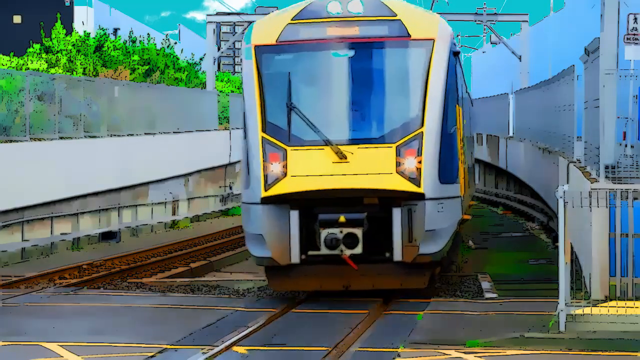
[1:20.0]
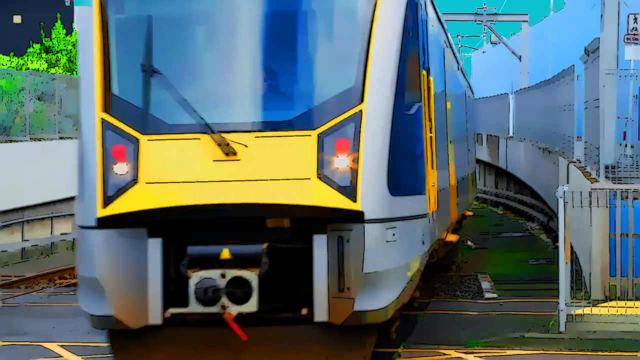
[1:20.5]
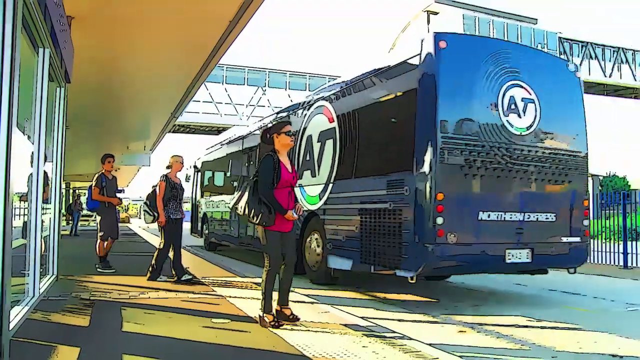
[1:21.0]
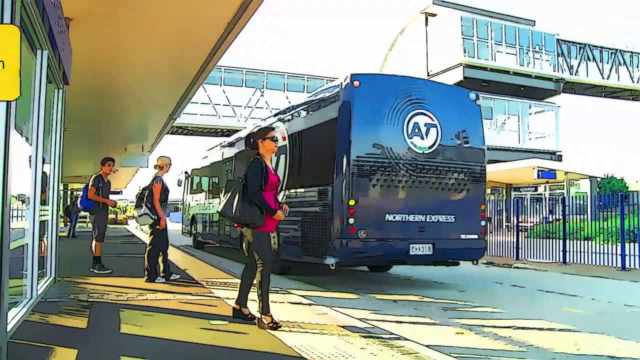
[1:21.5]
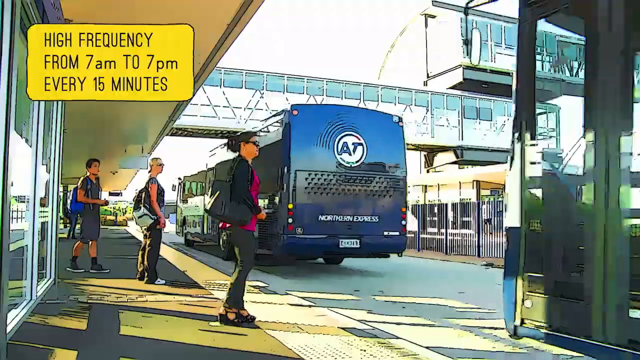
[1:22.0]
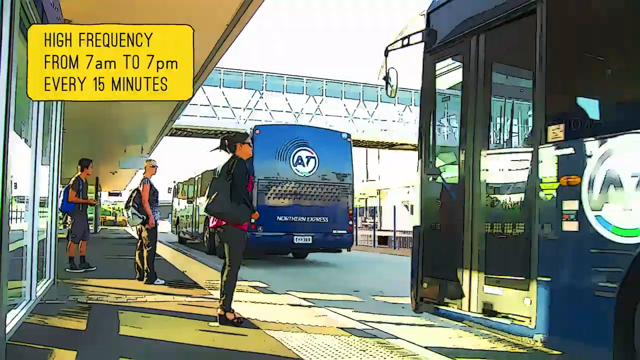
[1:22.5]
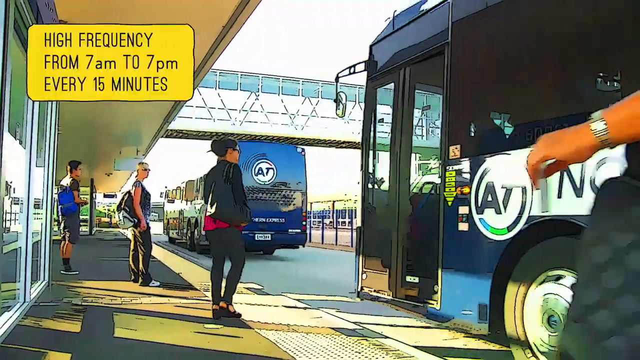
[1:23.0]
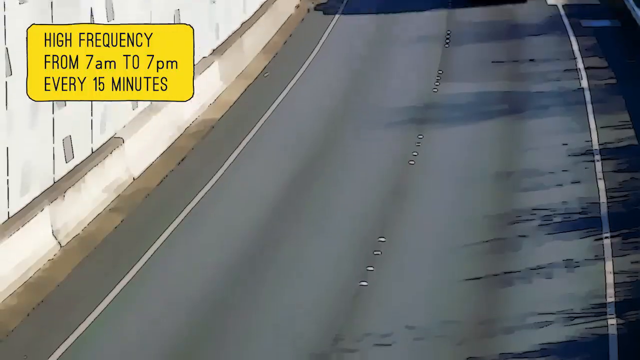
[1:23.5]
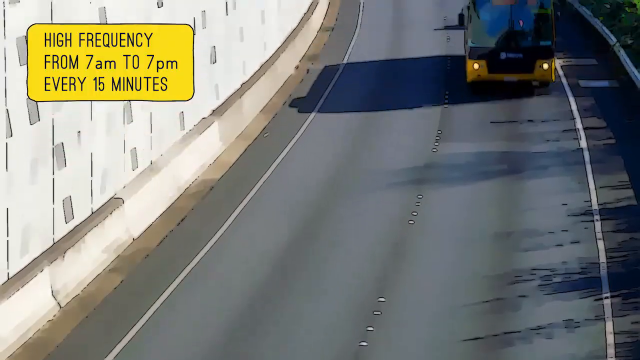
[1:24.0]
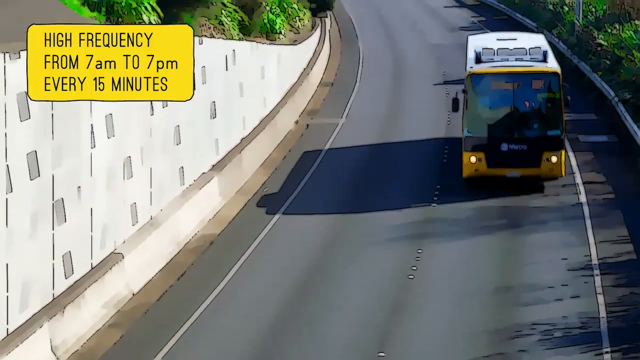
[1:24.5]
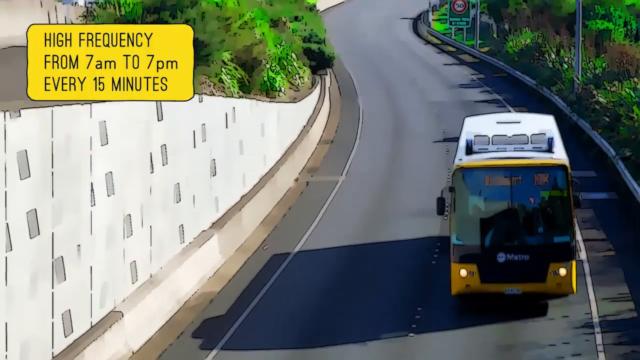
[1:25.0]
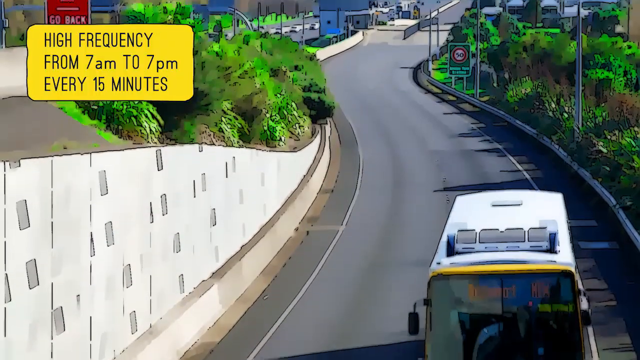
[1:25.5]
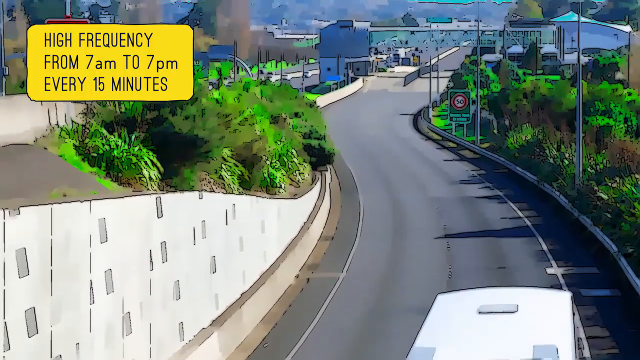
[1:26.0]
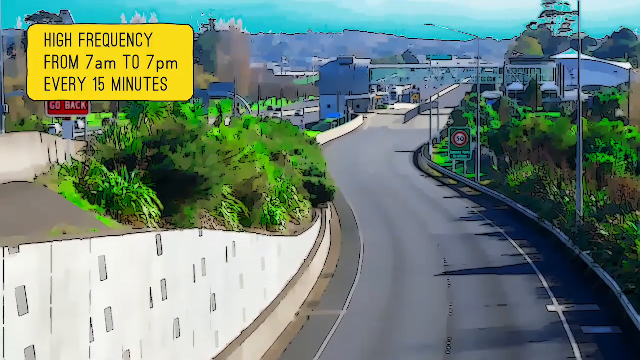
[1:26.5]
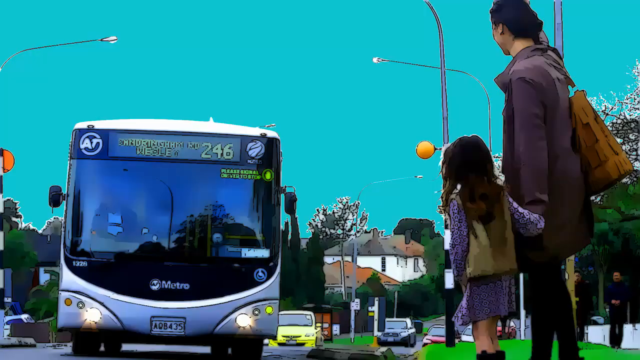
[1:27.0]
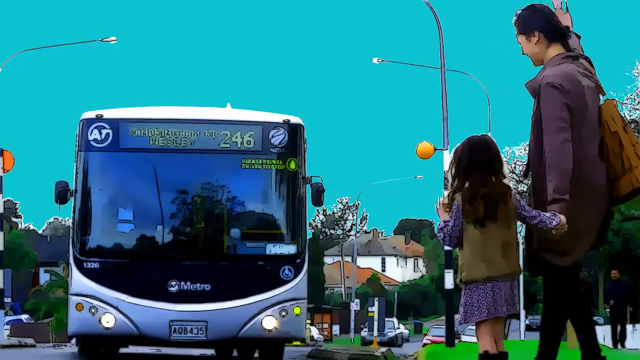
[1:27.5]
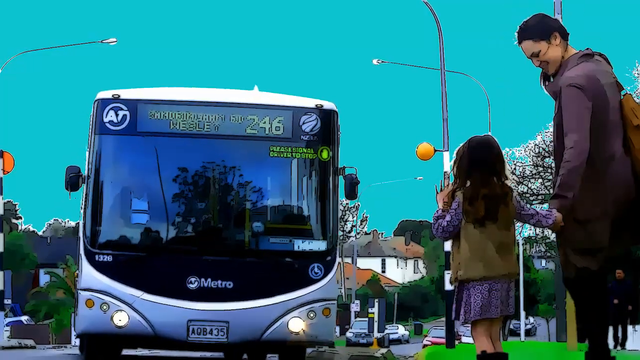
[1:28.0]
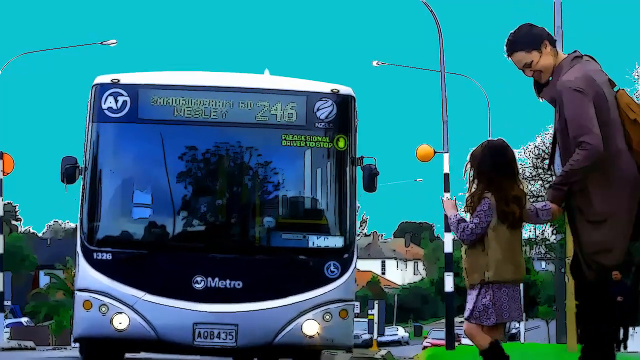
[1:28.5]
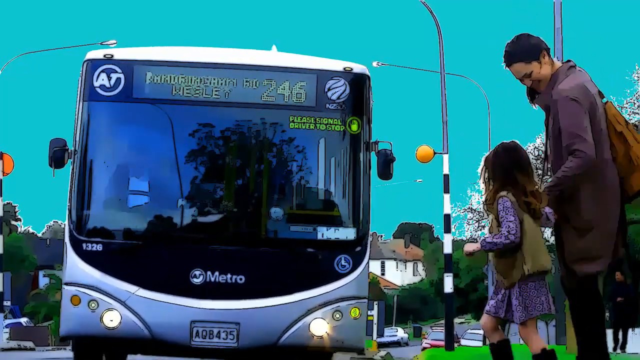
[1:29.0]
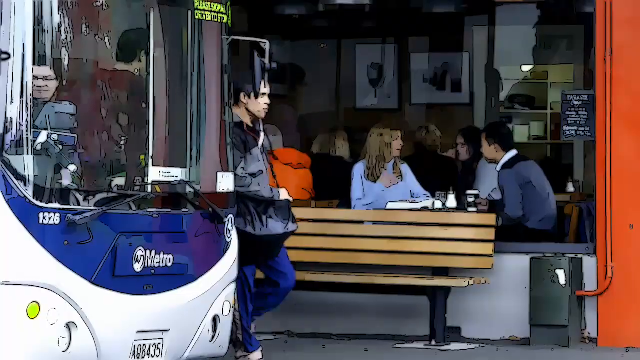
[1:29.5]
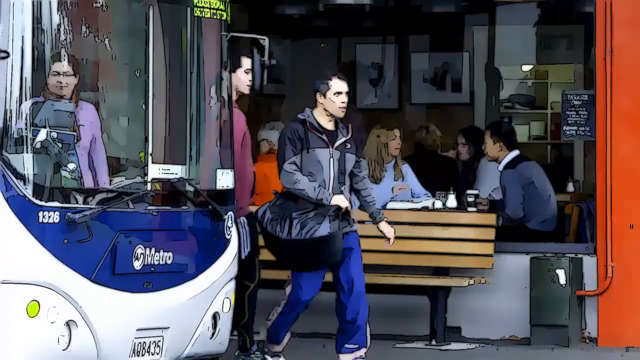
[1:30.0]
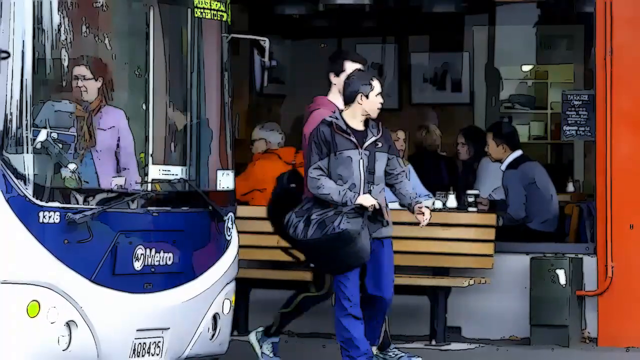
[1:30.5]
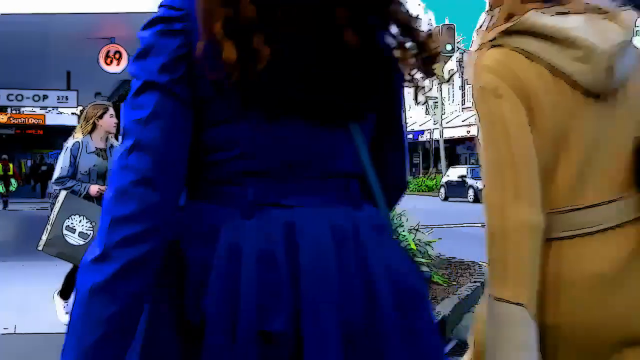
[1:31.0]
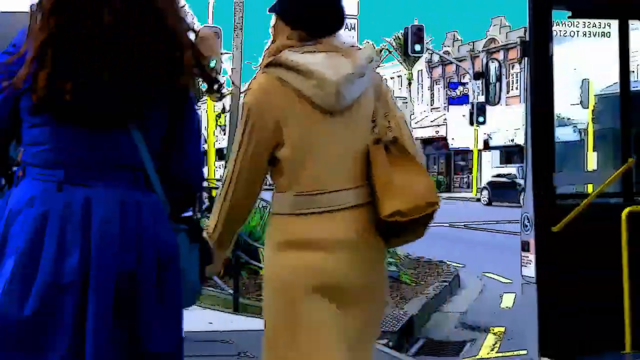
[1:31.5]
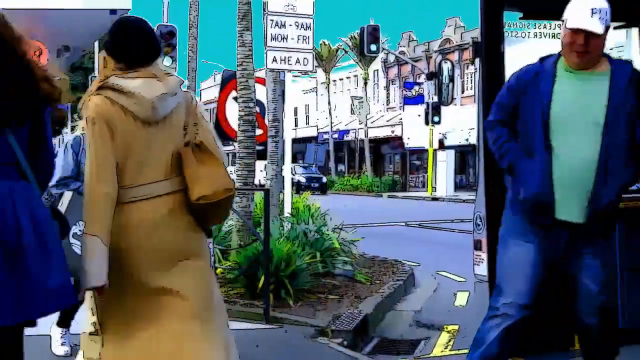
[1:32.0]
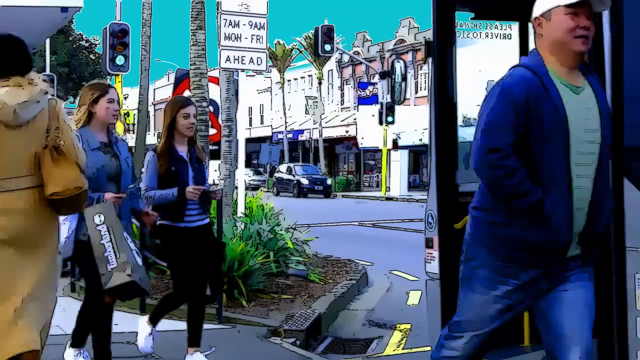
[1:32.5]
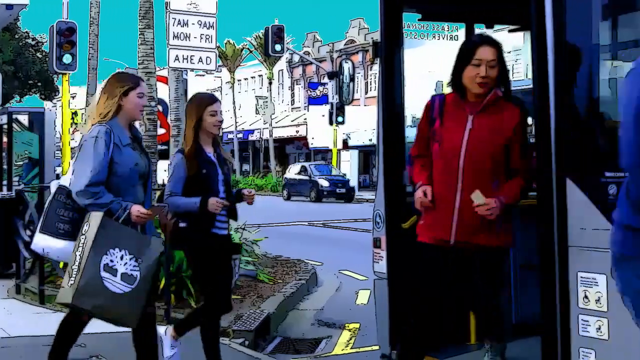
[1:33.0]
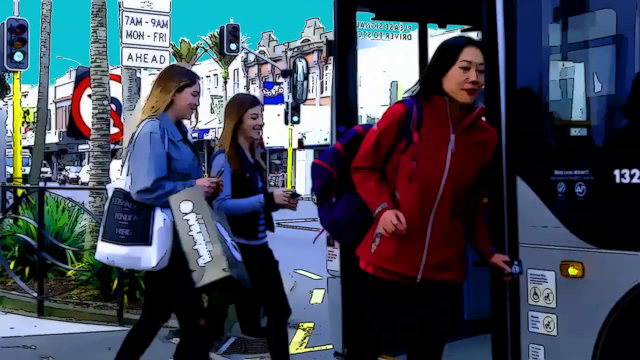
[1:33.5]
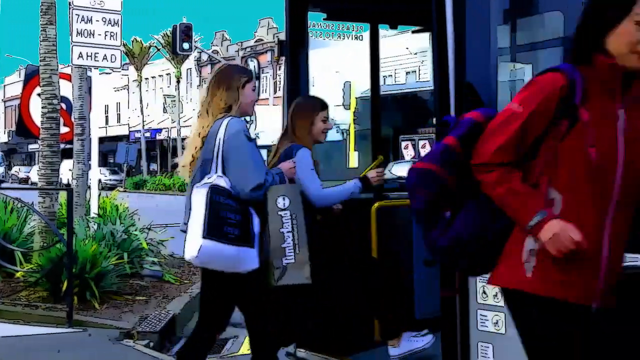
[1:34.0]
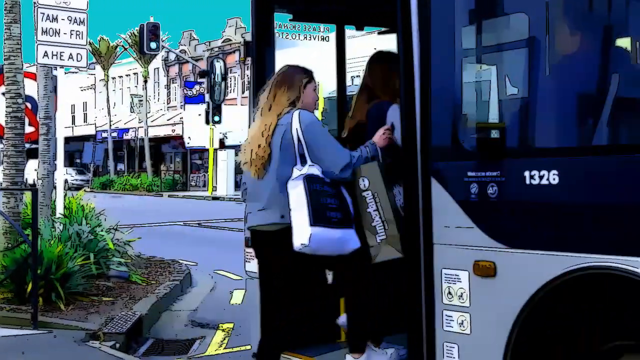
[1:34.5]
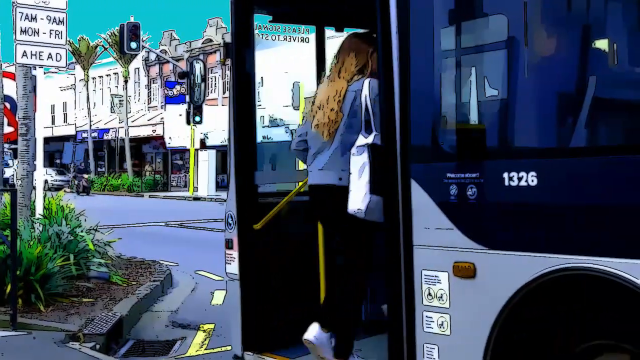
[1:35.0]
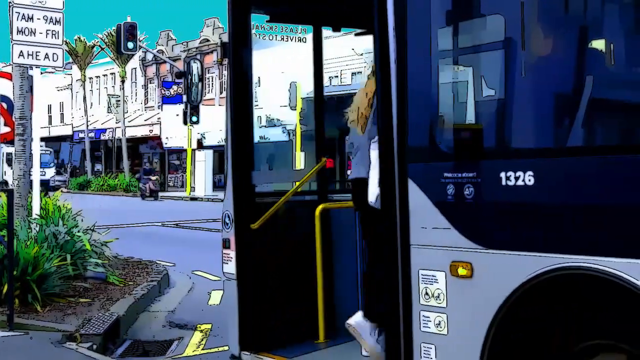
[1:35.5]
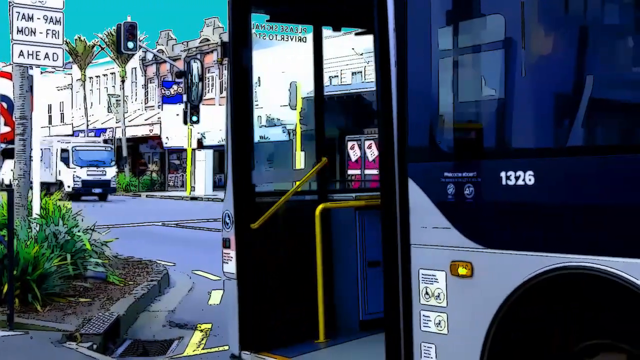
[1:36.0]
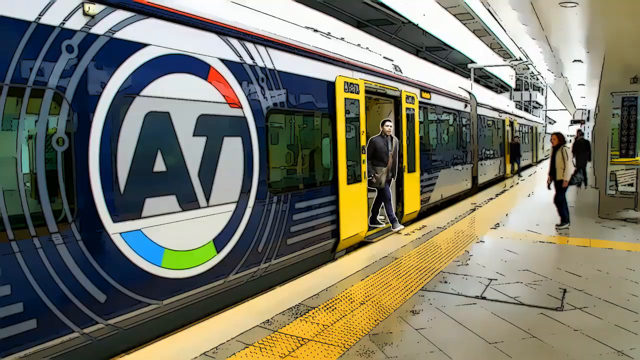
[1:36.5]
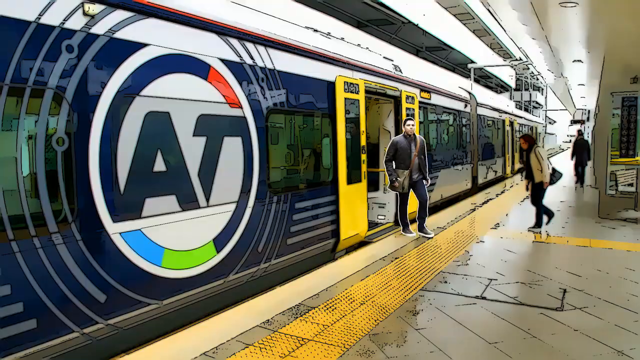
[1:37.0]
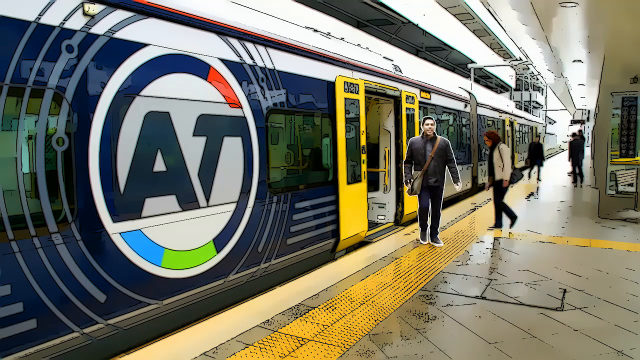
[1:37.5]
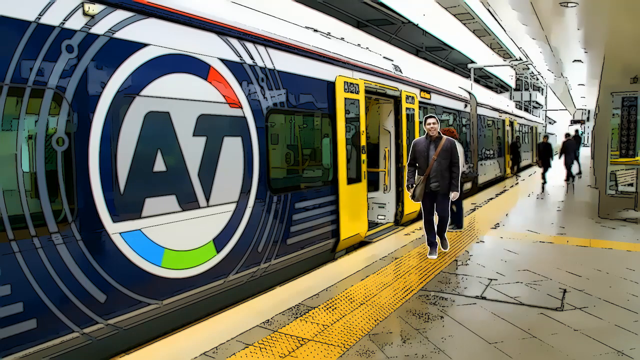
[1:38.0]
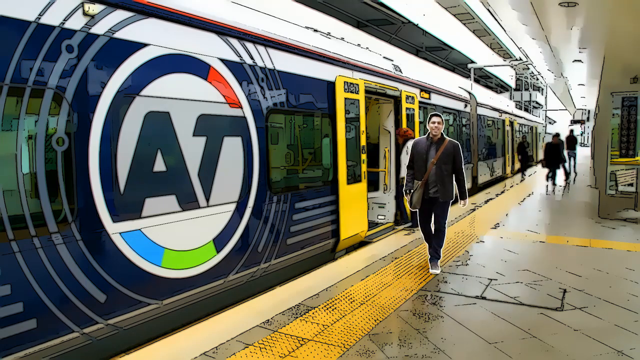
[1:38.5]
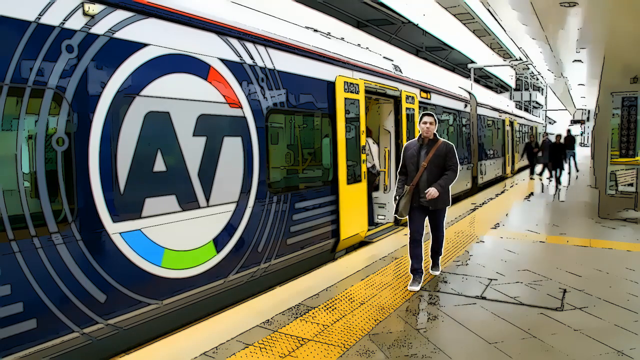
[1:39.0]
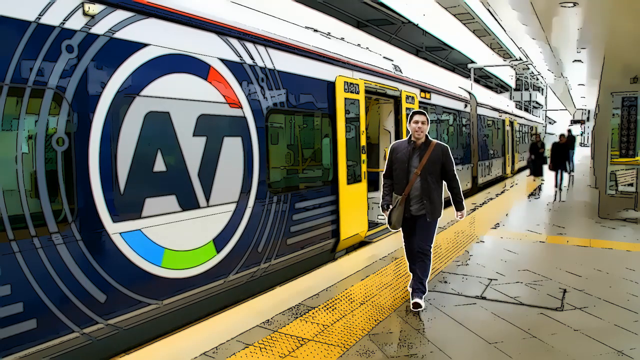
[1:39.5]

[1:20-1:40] The train leaves the station, away from the city. A blue AT bus pulls away from the bus station, and a title comes on the screen: "High frequency from 7am to 7pm every 15 minutes". Another bus pulls into the bus station and stops. An aerial shot shows a bus on a road, and the camera angle goes higher. Another bus, the 246, comes to a stop, where a girl and her mother are waiting and waving to it; the mother gently pulls the child away from the front of the bus. When the doors open, lots of people exit the bus, and then other people, including two girls, get on, scanning their cards on the reader. The man with the shoulder bag and the white outline exits an AT train through the yellow doors and walks towards the camera, smiling and talking.